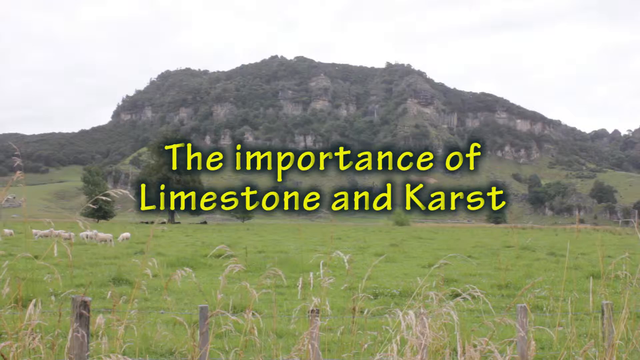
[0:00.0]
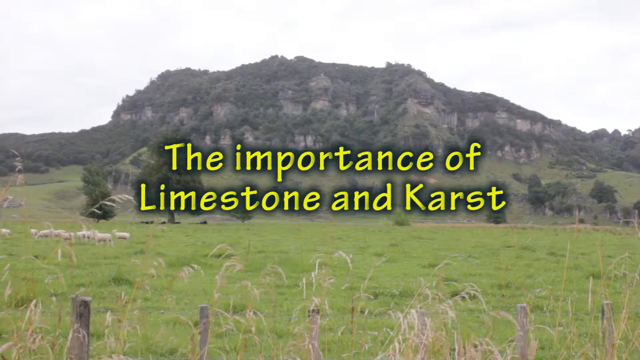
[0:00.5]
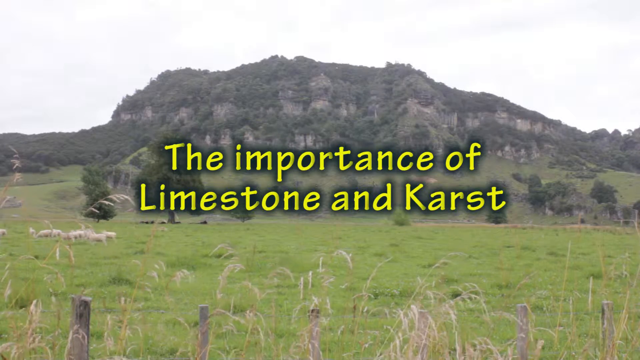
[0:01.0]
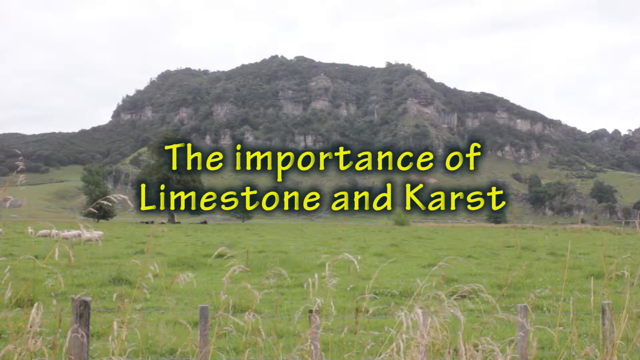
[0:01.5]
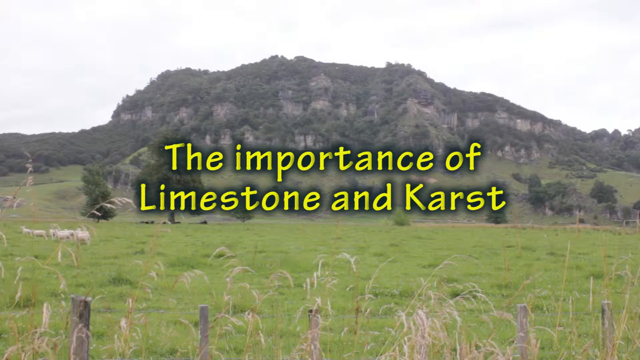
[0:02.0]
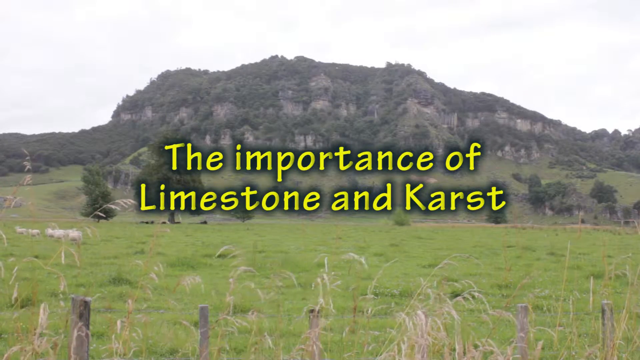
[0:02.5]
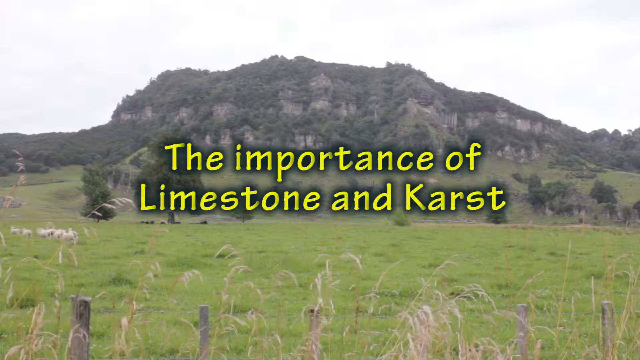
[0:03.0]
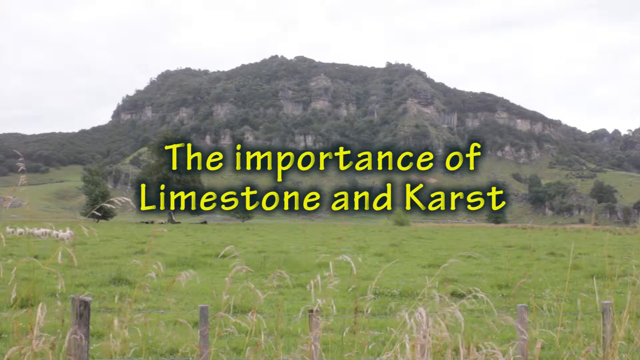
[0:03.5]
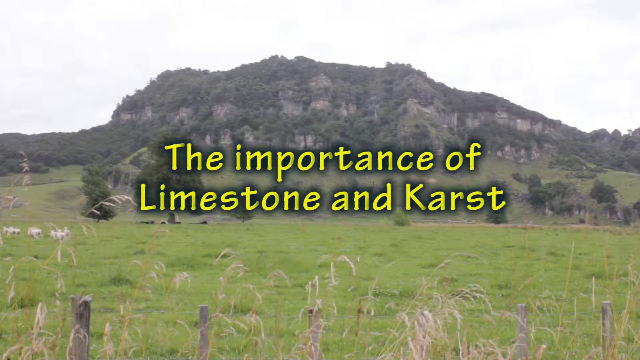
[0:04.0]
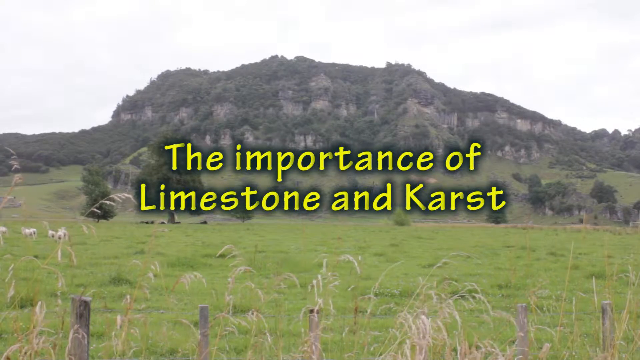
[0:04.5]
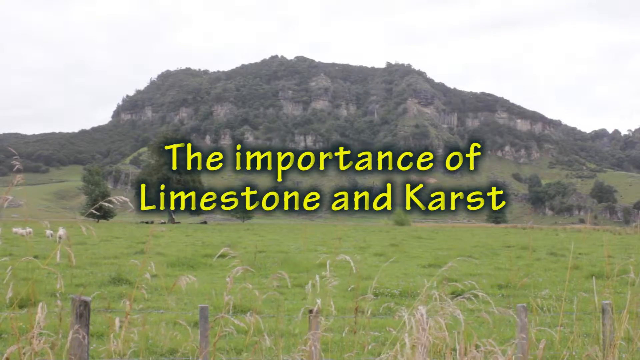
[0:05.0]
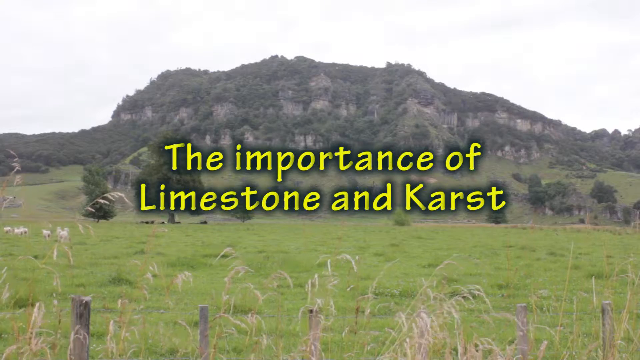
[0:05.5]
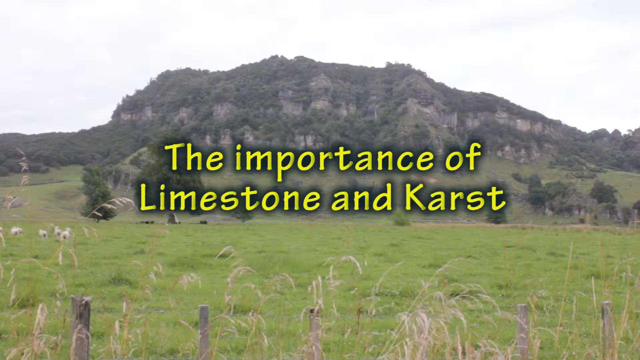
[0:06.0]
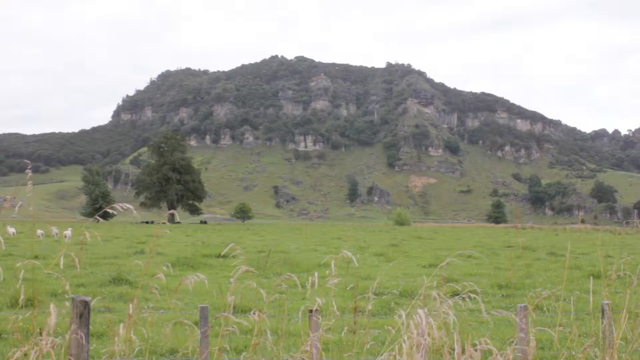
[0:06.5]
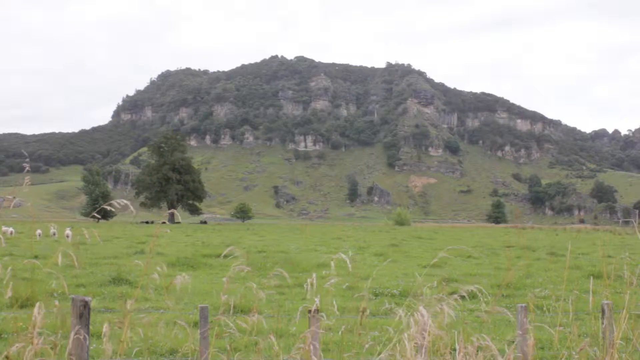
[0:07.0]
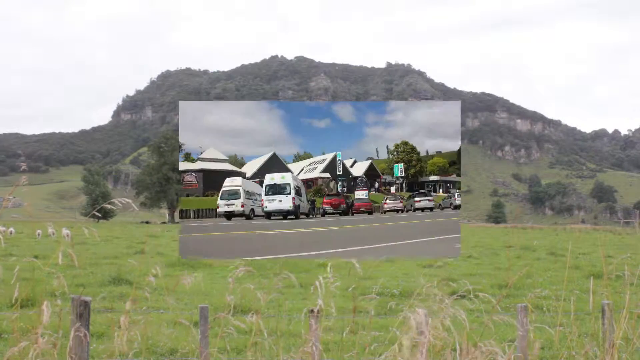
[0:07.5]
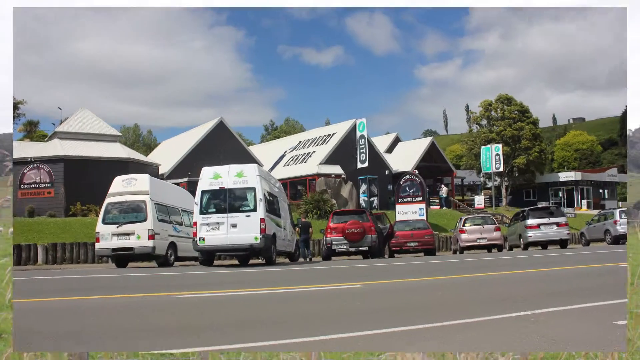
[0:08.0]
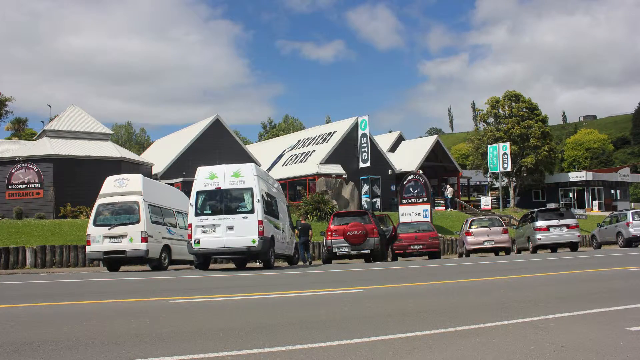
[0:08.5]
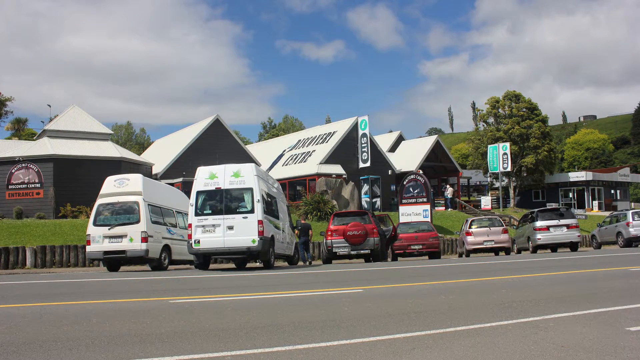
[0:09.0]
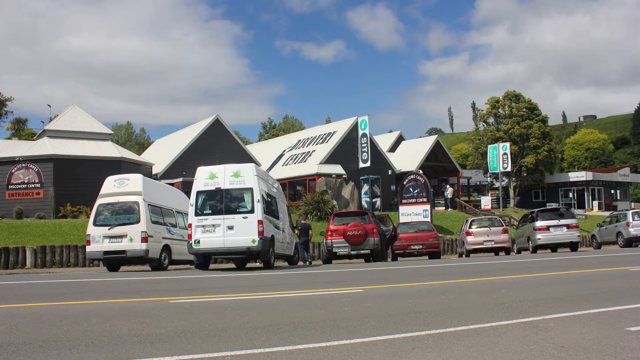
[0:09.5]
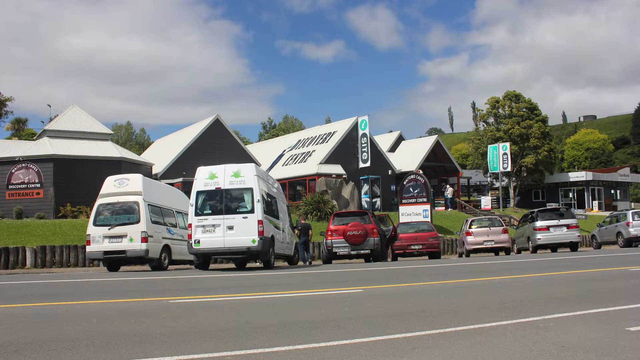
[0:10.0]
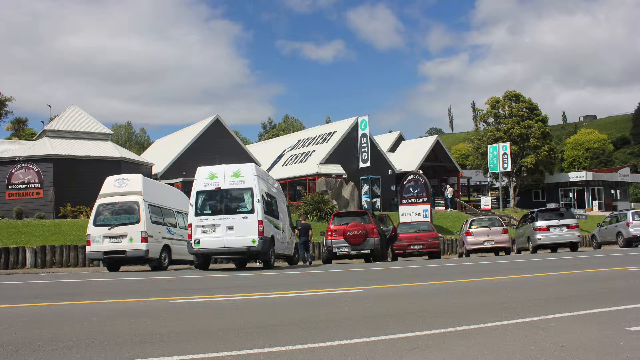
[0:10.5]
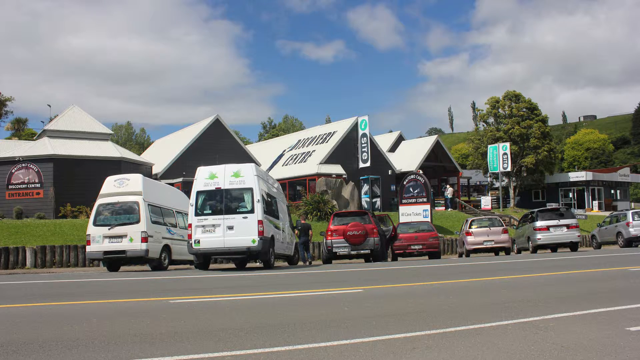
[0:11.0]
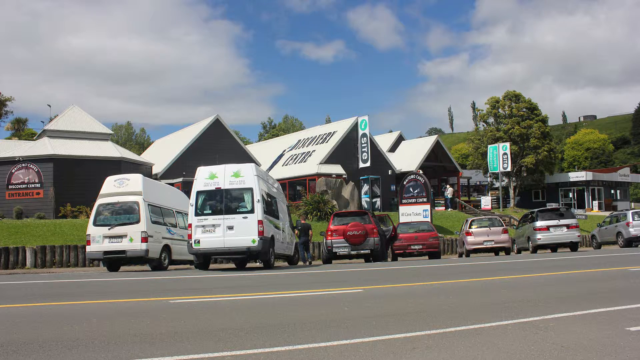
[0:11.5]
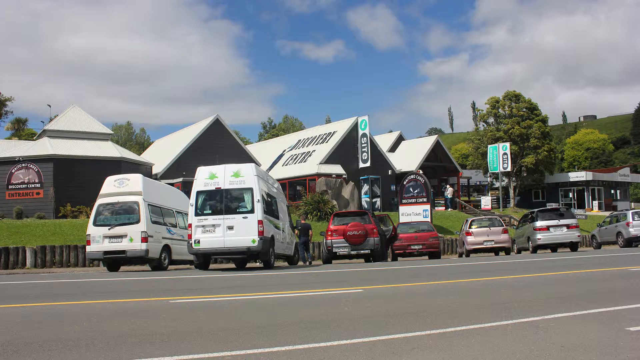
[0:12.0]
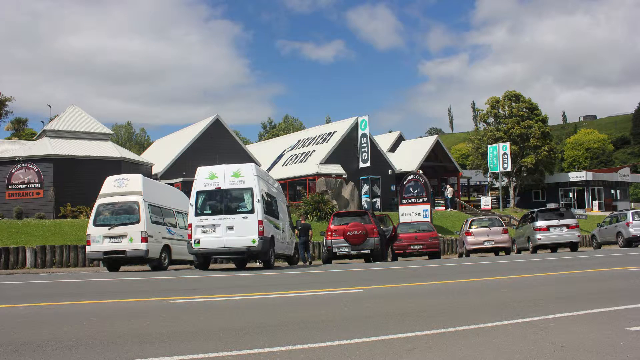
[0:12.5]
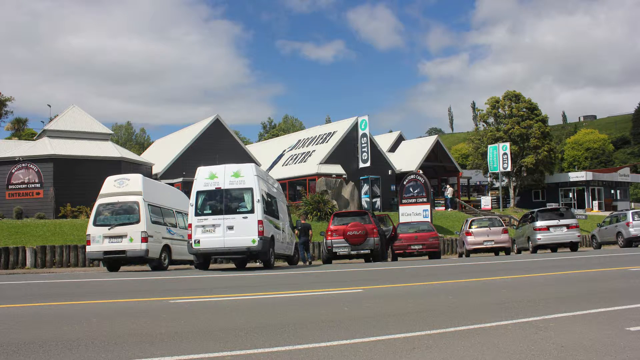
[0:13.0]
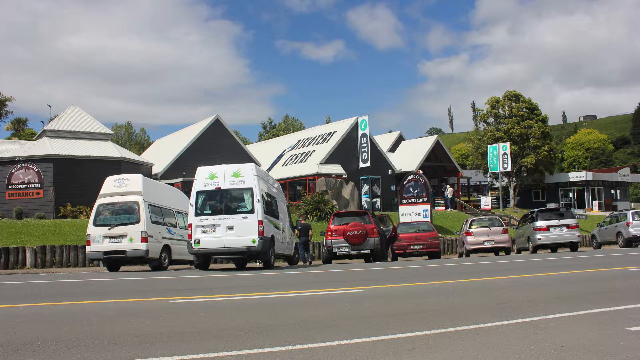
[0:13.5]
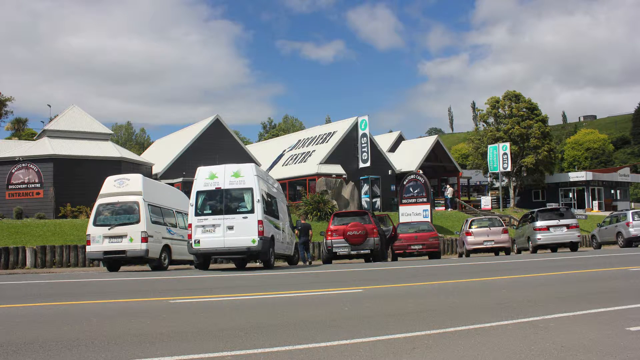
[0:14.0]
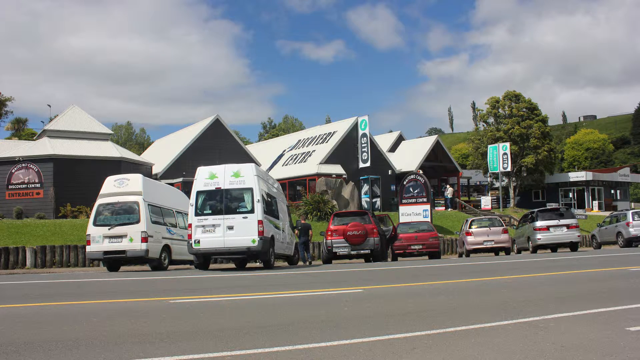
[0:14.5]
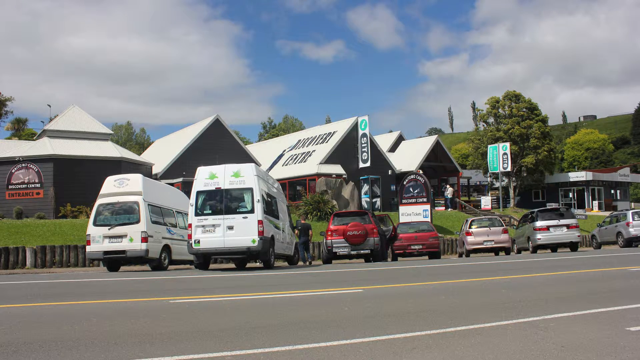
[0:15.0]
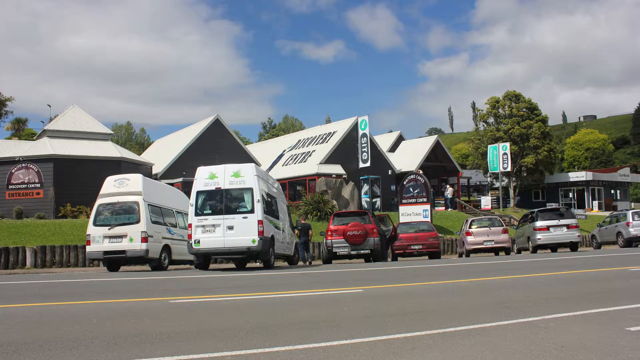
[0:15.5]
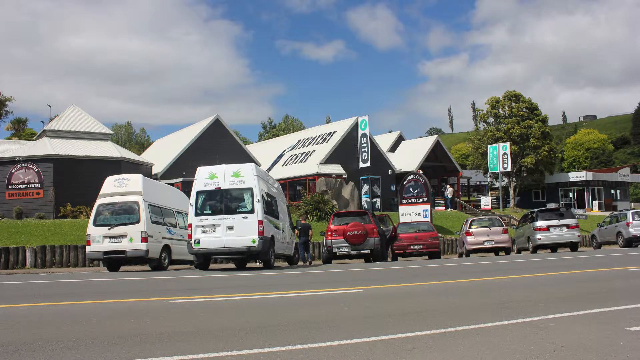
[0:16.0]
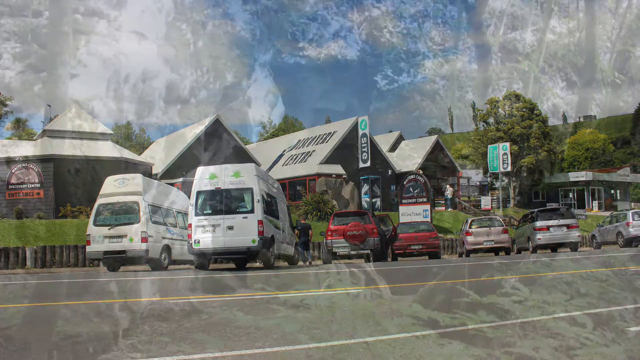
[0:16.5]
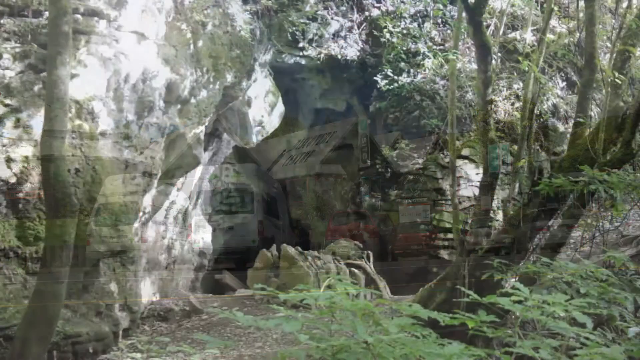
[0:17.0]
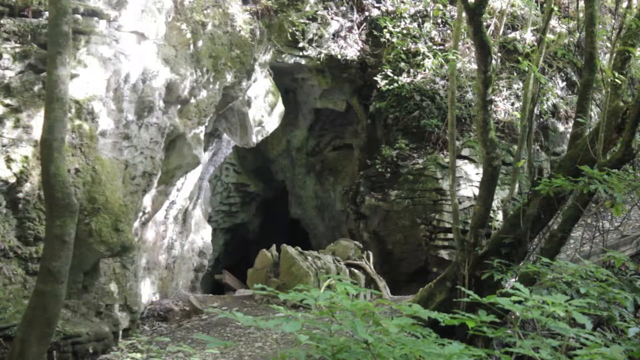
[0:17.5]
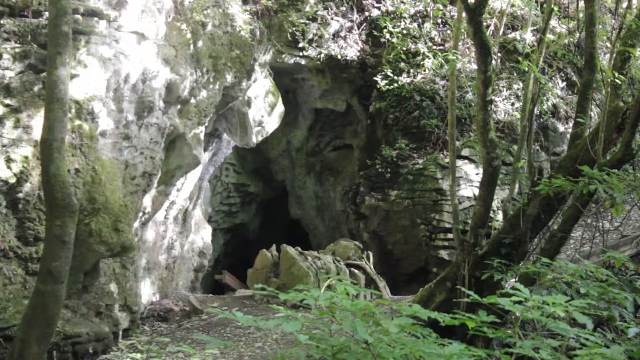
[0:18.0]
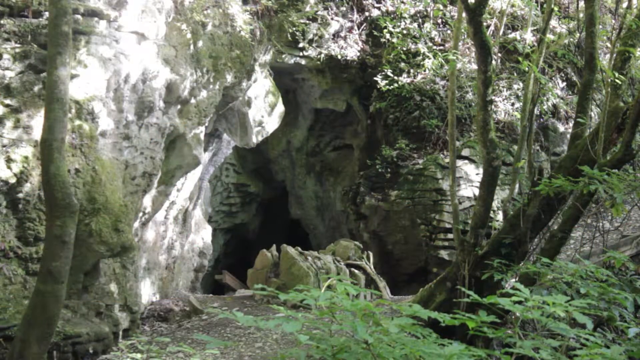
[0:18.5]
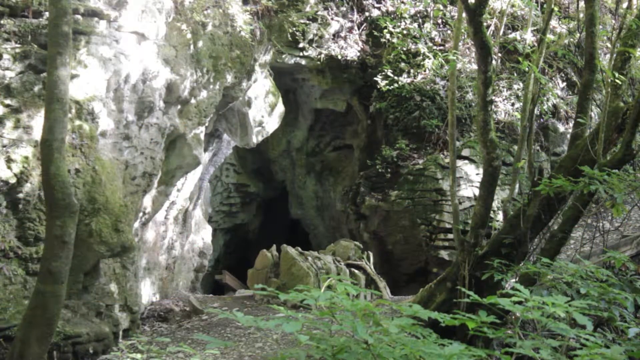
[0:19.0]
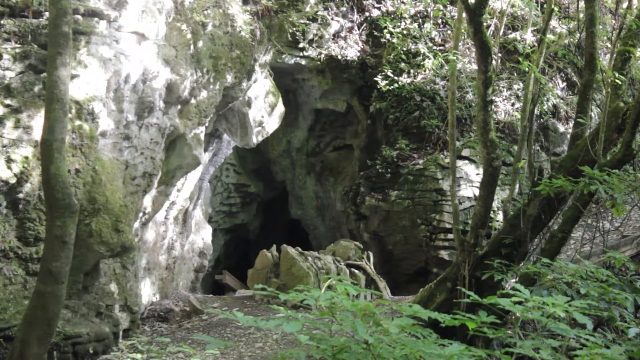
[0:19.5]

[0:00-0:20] The video opens with a caption in the center that reads "the importance of limestone and karst". Behind it is what appears to be a grassy green field, with a few wooden fence stakes on the near side at the bottom of the view and what appear to be sheep moving on the left. In the background a hill rises, with lots of green trees on the left, more barren ground in the center and right, and trees again on the far right. It all culminates in a hill plateau or large green hill with many green trees growing on it. It is rather steep in parts, with rock walls on the sides that look pretty tall.